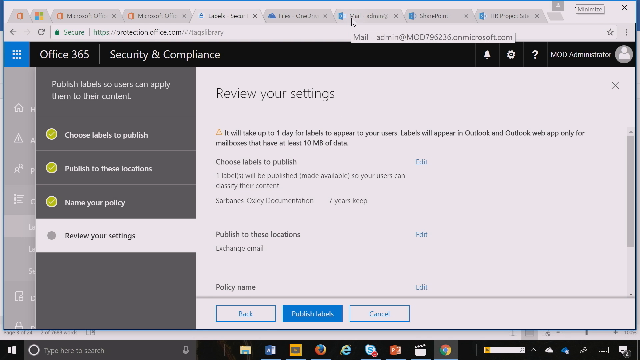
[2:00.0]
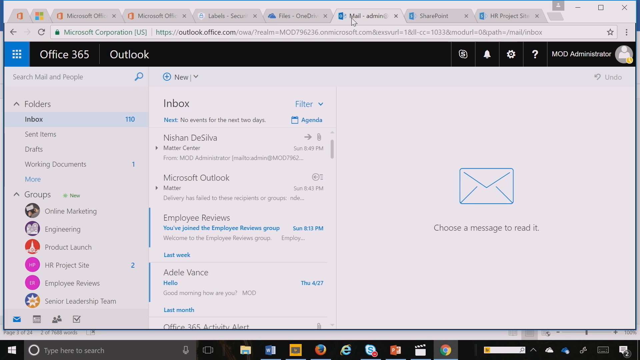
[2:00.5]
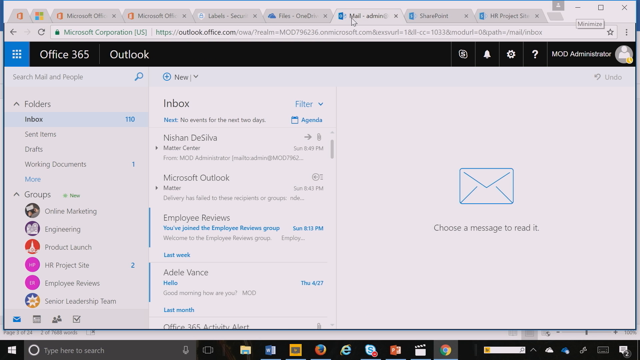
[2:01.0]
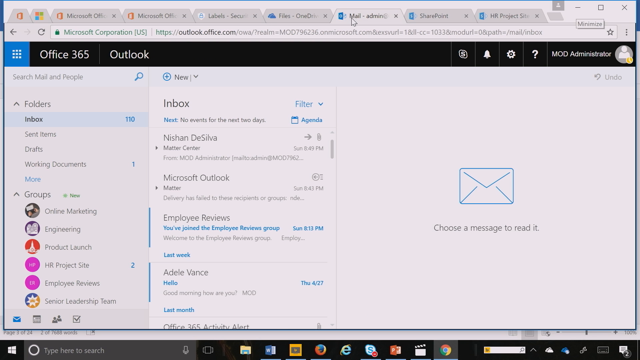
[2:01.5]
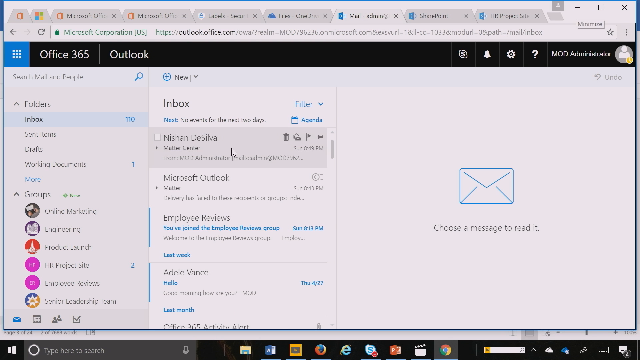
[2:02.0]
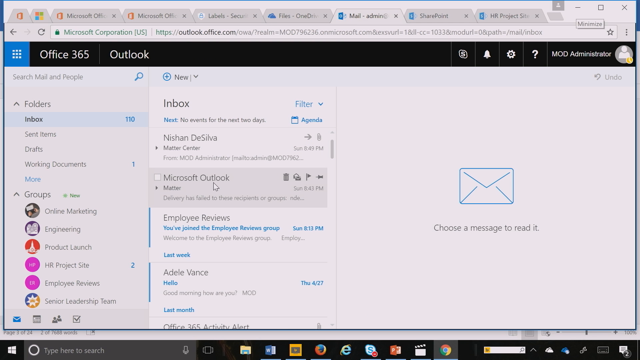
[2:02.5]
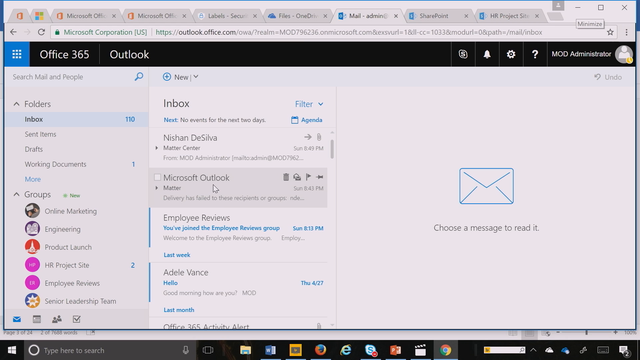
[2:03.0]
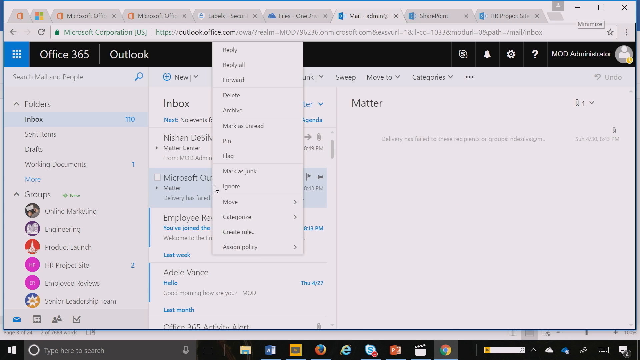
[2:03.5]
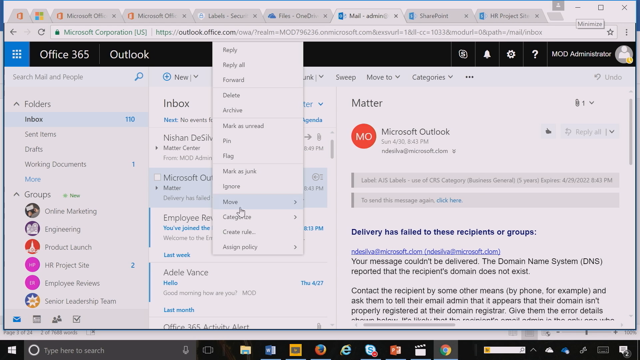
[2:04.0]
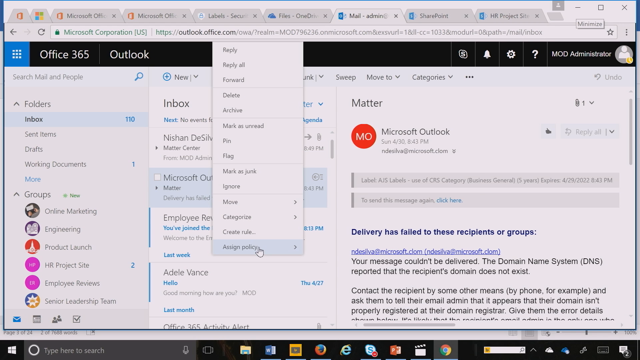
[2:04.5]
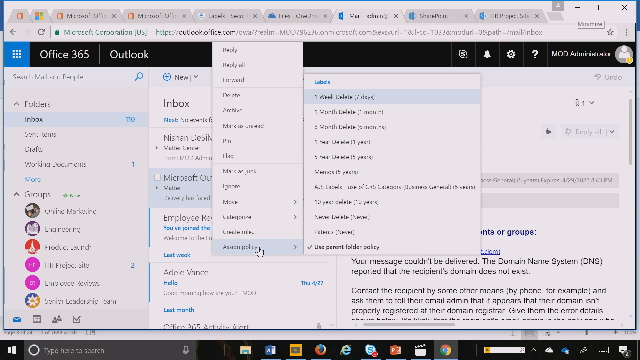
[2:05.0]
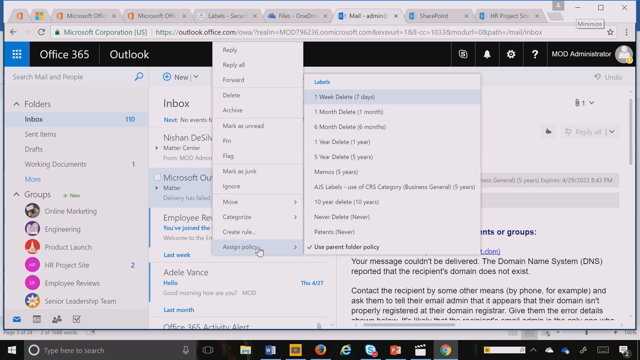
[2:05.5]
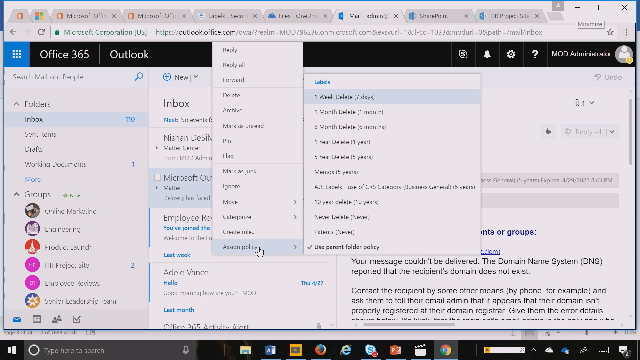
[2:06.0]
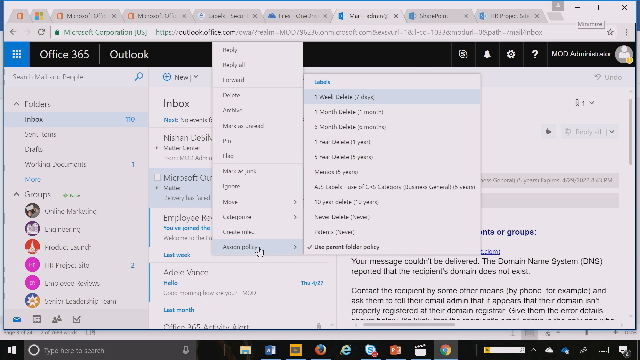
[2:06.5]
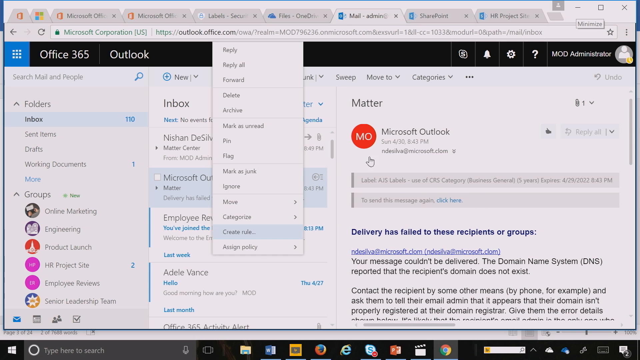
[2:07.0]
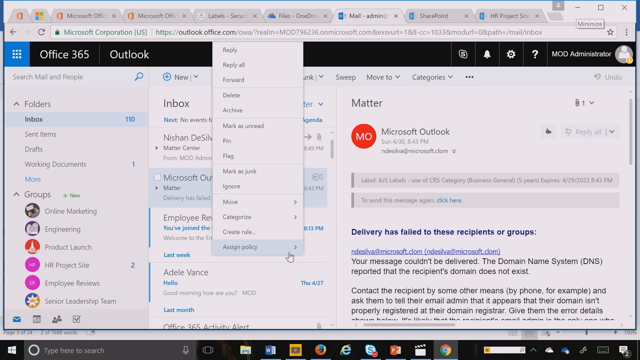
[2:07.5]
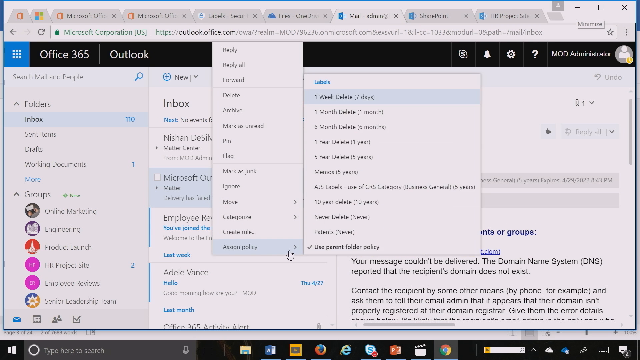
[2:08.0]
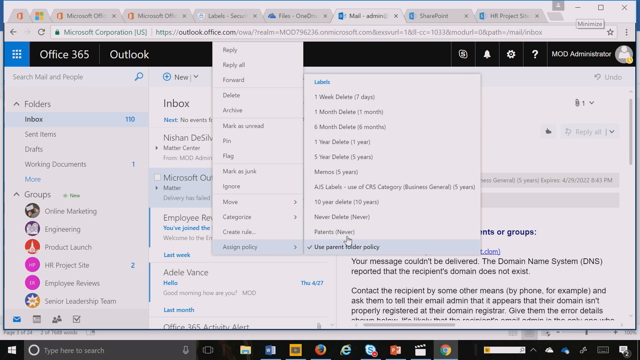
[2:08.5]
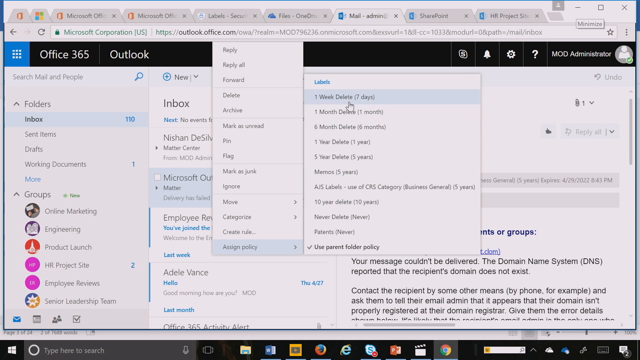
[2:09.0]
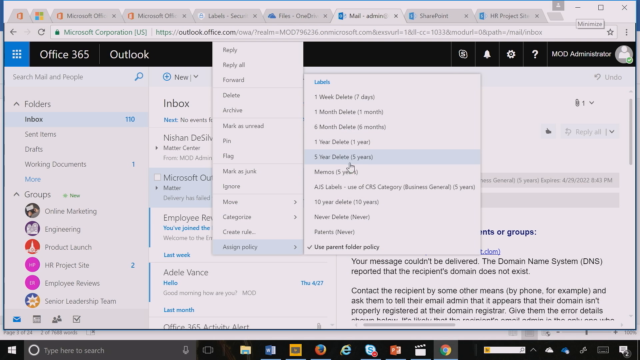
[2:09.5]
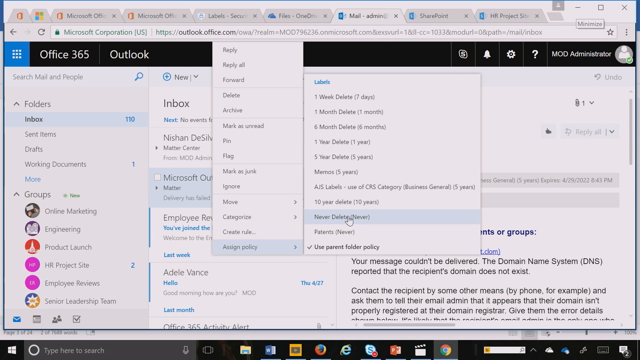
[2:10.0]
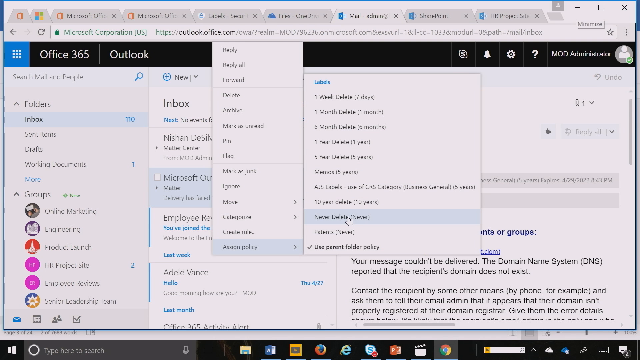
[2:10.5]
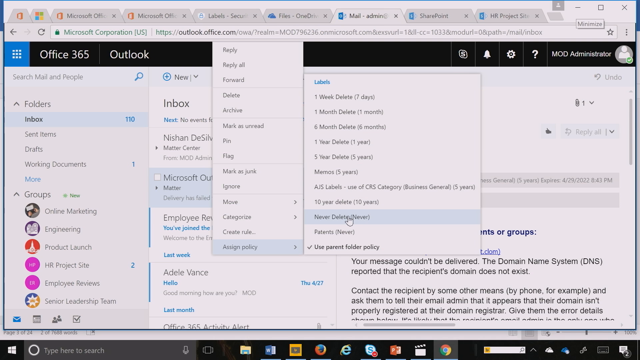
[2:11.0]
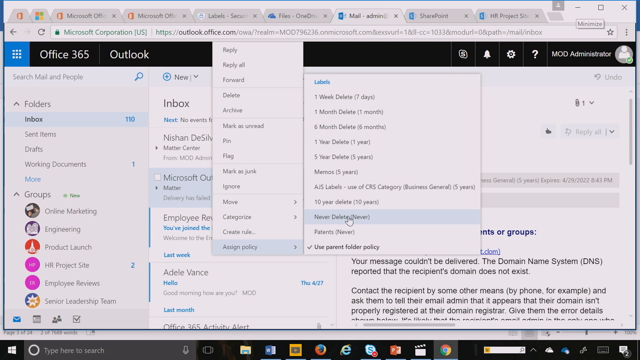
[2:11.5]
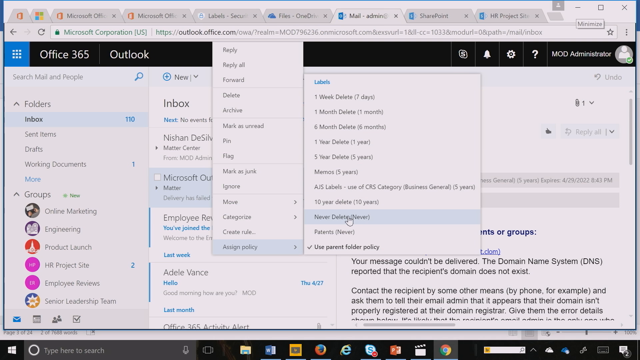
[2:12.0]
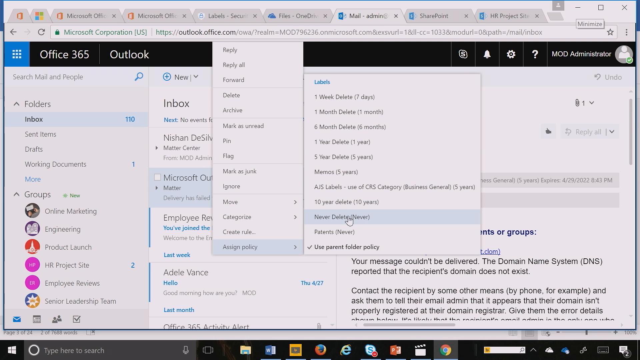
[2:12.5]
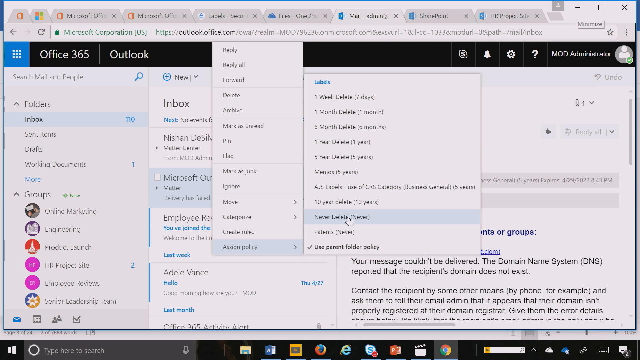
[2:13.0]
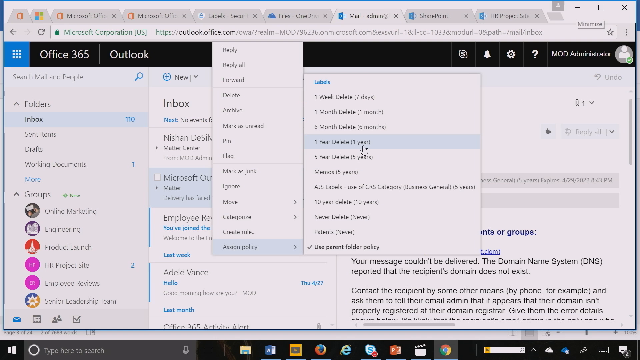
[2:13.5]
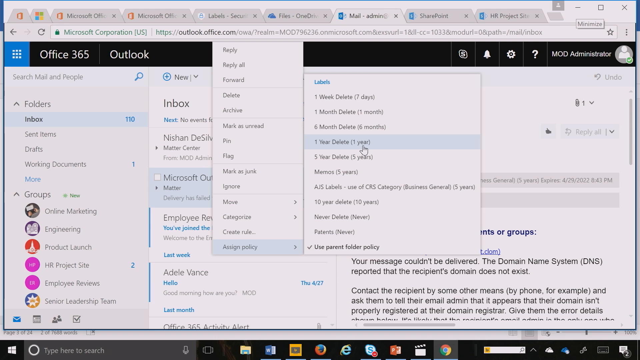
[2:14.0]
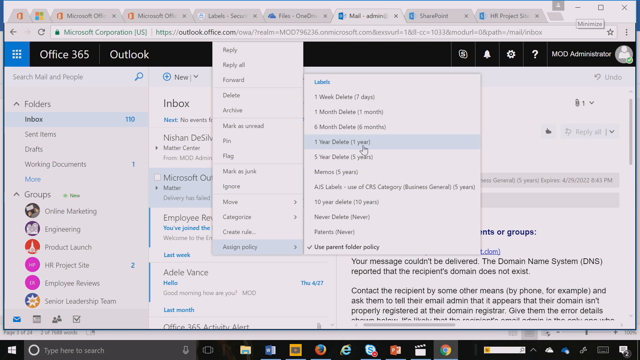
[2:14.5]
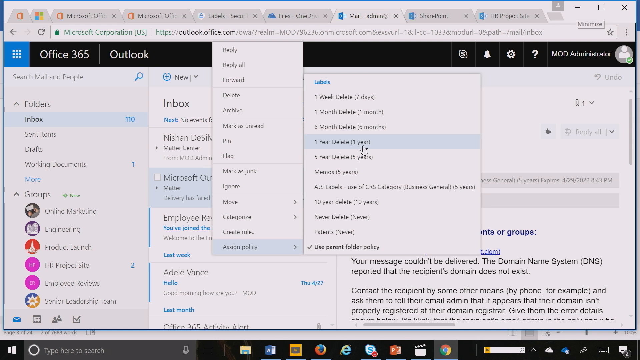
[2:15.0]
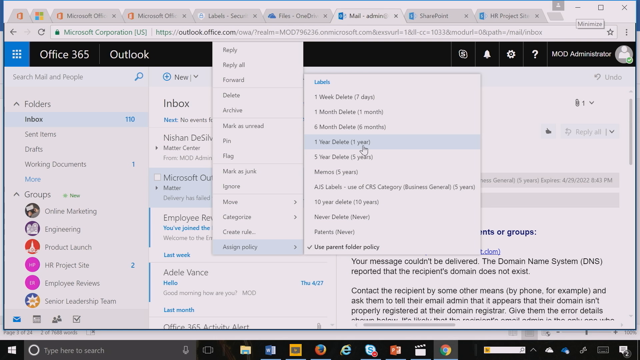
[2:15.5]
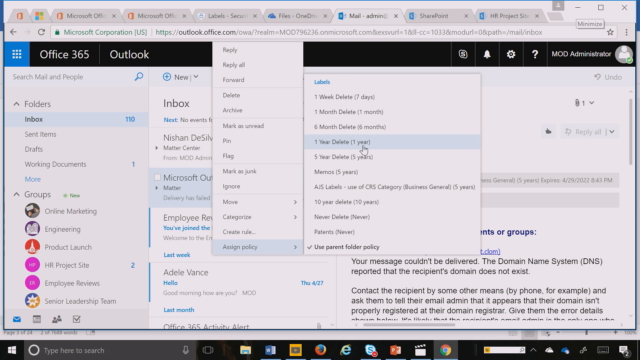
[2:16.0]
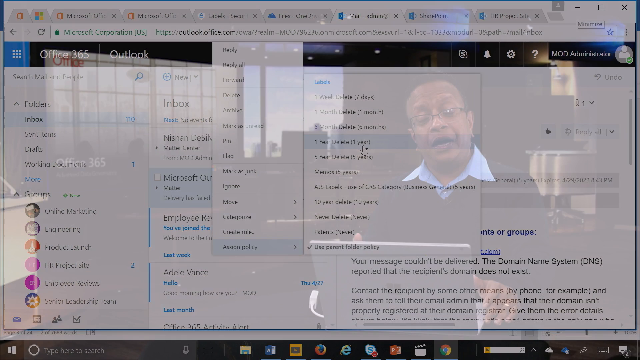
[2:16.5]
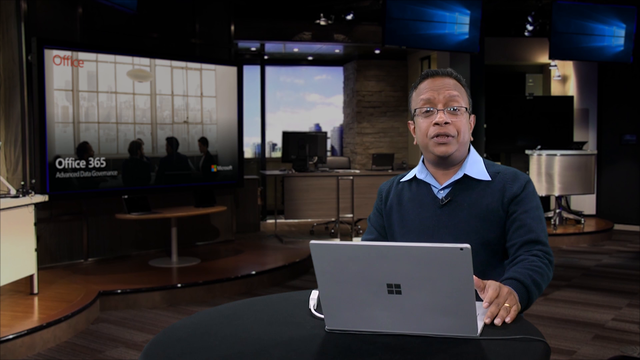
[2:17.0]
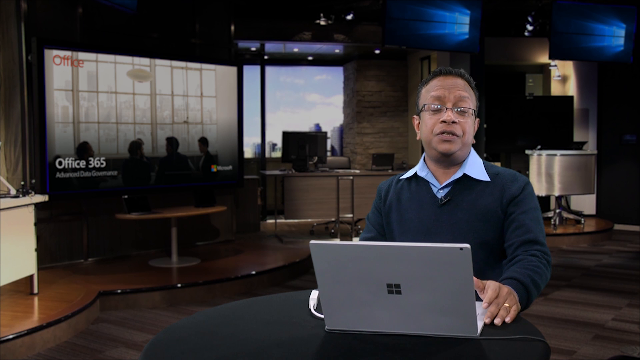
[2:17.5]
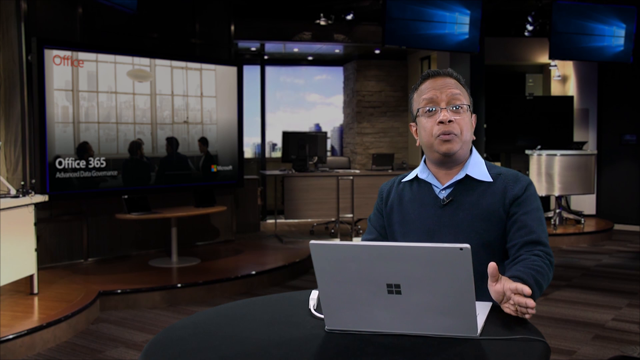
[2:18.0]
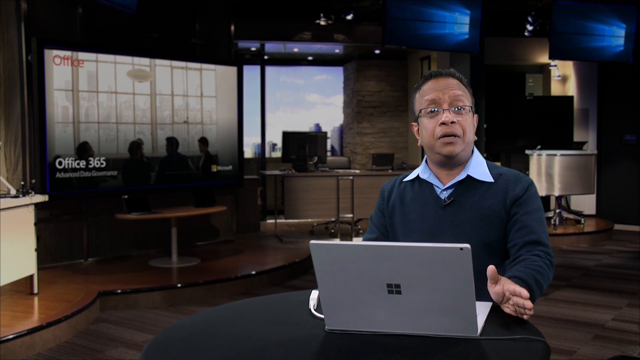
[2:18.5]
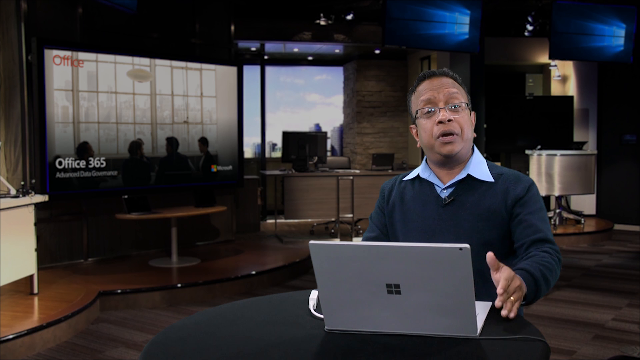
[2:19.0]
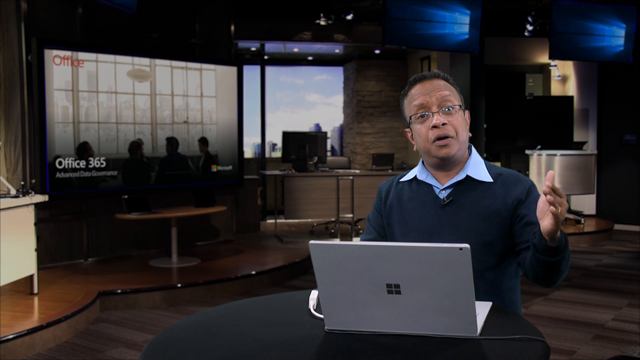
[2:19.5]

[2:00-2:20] A computer screen has a black bar at the top with white text reading "Office 365 Outlook", and underneath is an inbox with emails. A cursor hovers over one email, which is highlighted in gray, then scrolls down and hovers over a different email. The person seems to right-click, a menu pops up, and an option is selected, after which another menu pops out; the cursor keeps hovering over the menu options. The video cuts back to a man sitting at a desk with a gray laptop in front of him, talking to the camera. He wears a sweater with a light blue collared shirt sticking out of the top, and glasses, and seems to be talking with his hands, especially his left hand, which keeps moving up and down. Then another image of the screen shows the menus popped open, appearing to show all the options on the menu.